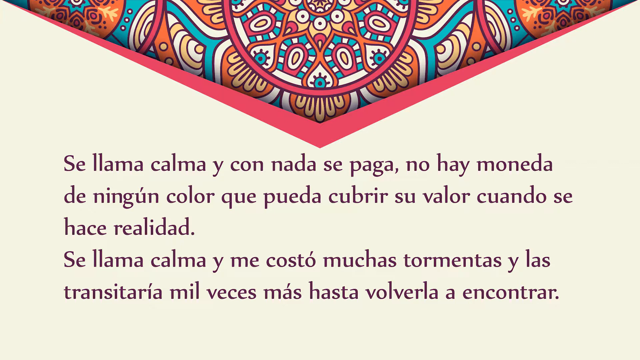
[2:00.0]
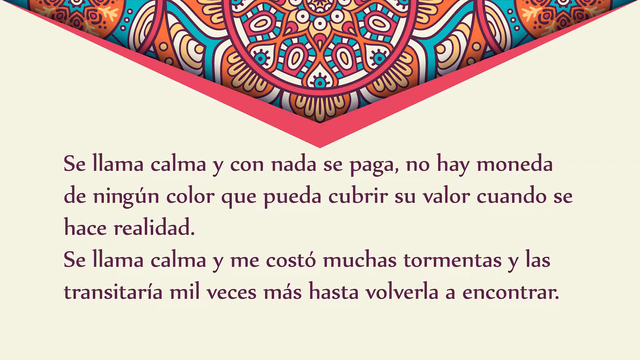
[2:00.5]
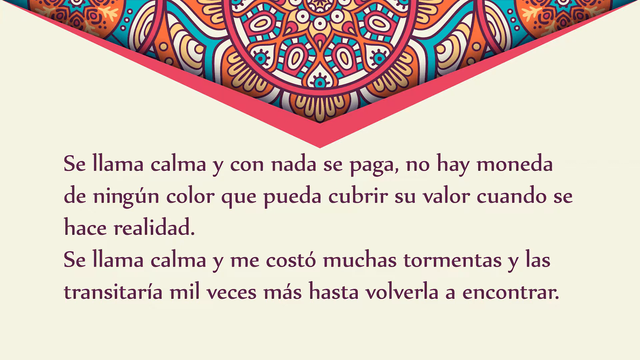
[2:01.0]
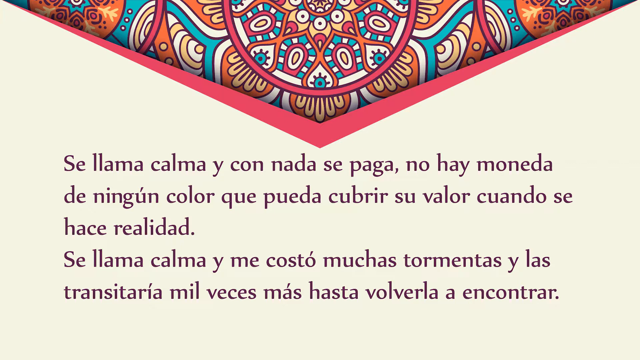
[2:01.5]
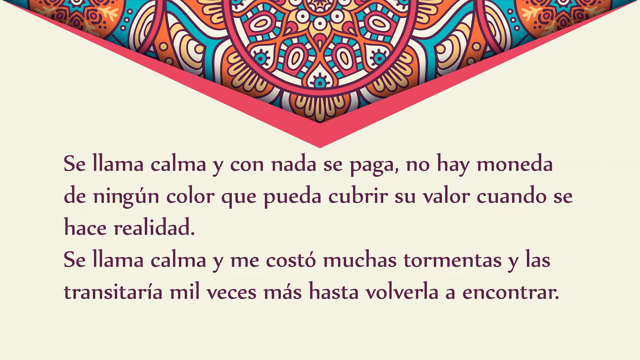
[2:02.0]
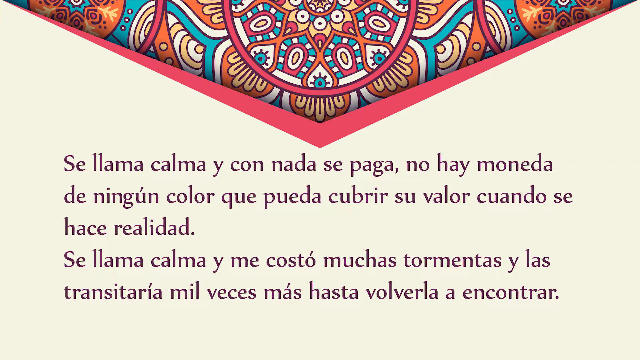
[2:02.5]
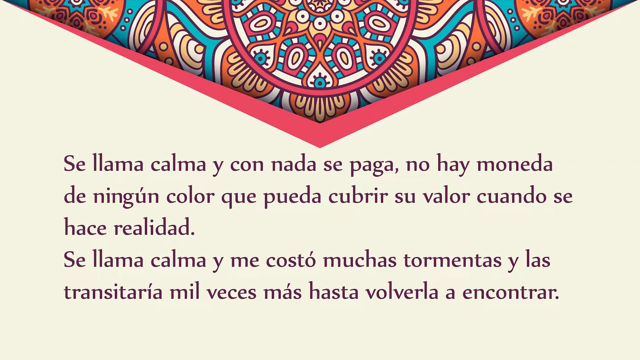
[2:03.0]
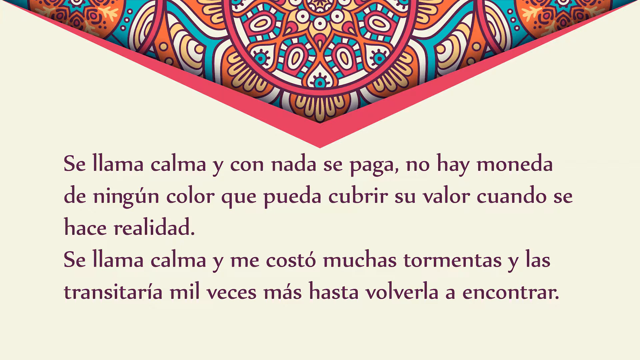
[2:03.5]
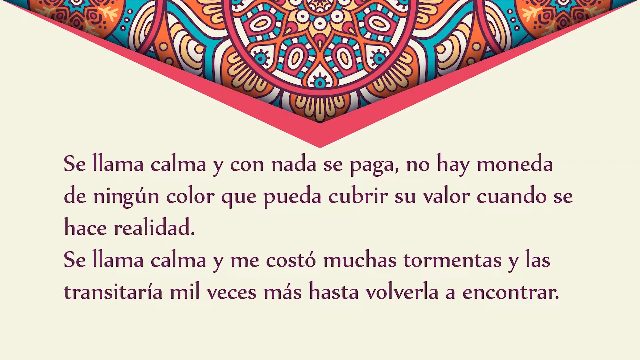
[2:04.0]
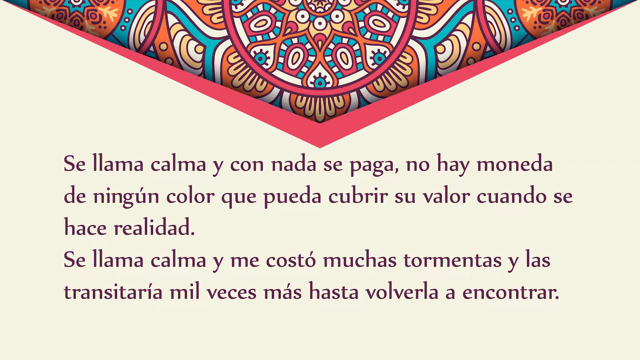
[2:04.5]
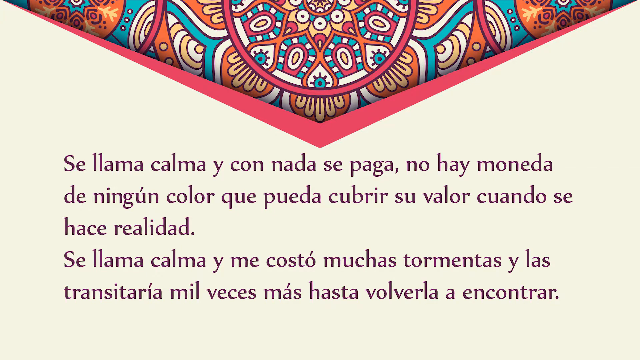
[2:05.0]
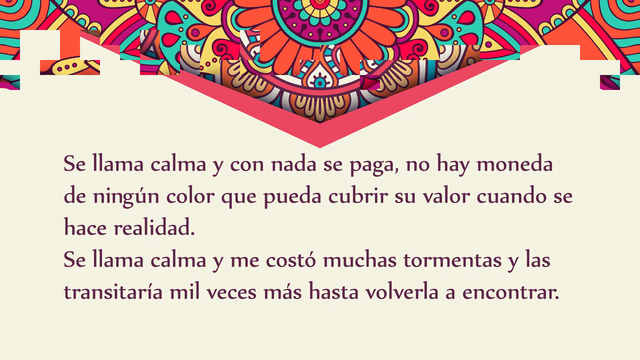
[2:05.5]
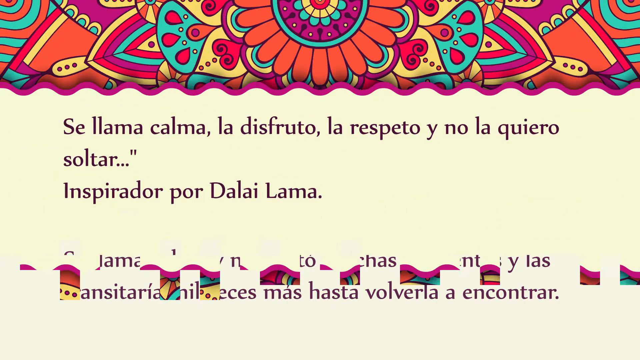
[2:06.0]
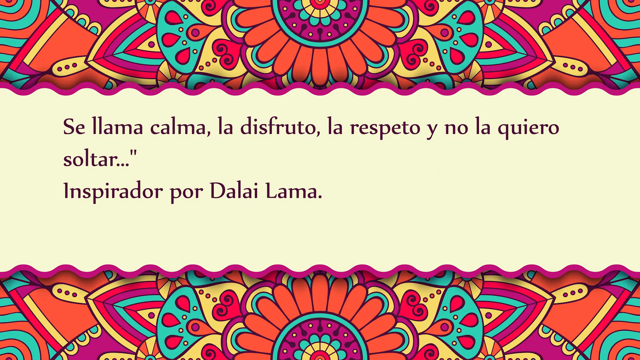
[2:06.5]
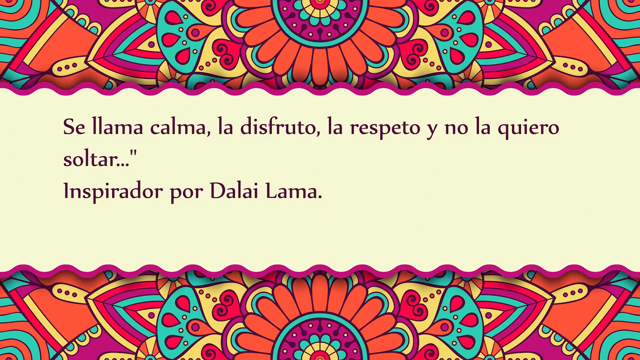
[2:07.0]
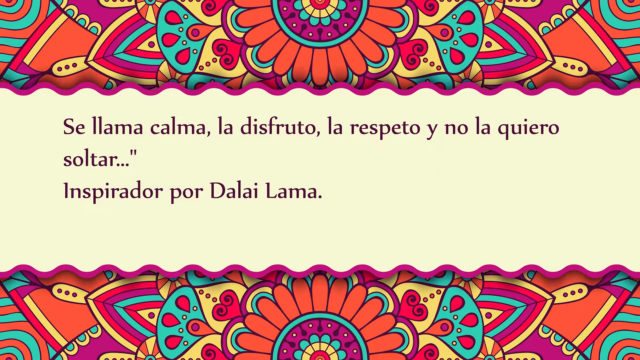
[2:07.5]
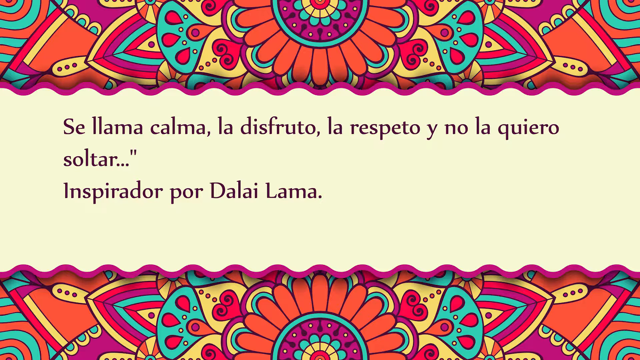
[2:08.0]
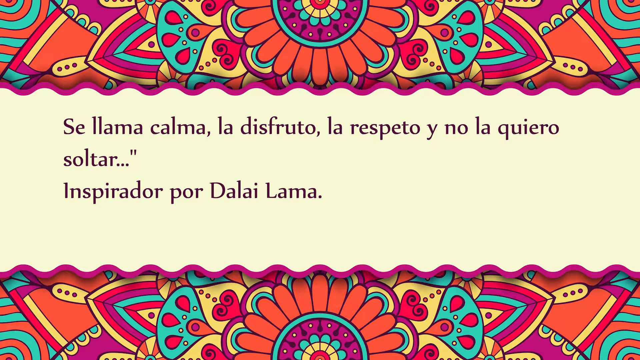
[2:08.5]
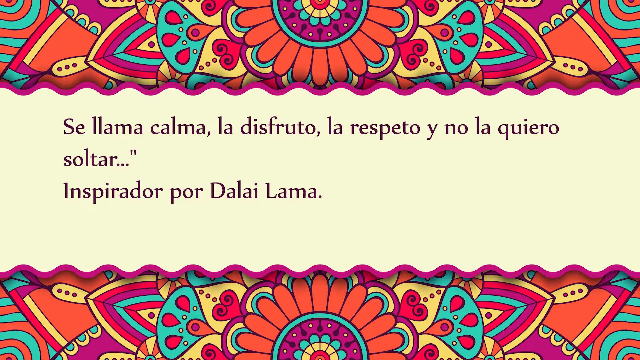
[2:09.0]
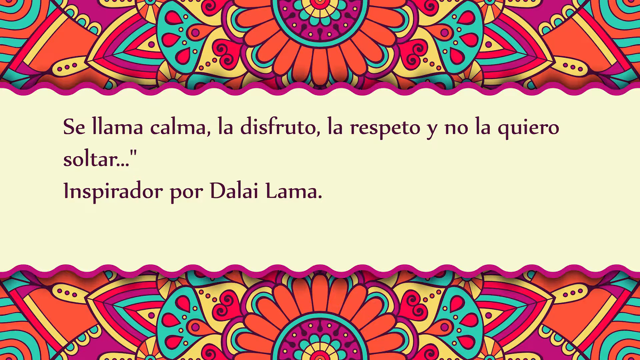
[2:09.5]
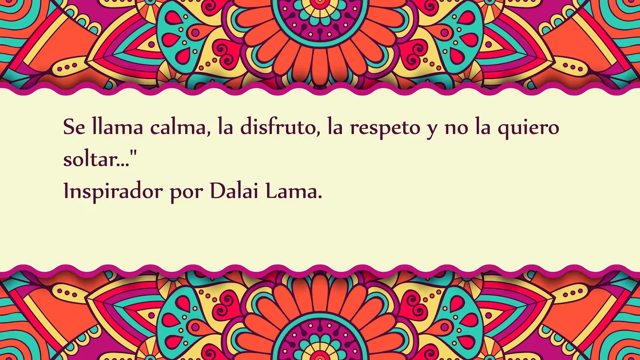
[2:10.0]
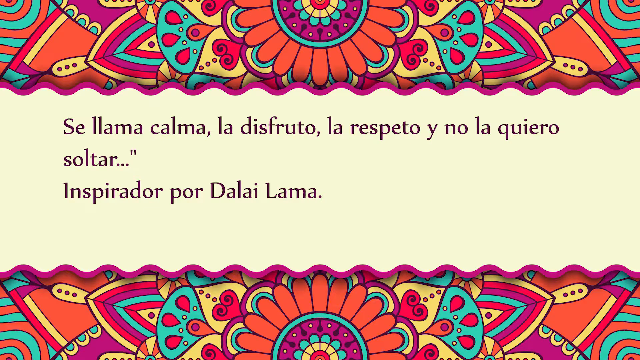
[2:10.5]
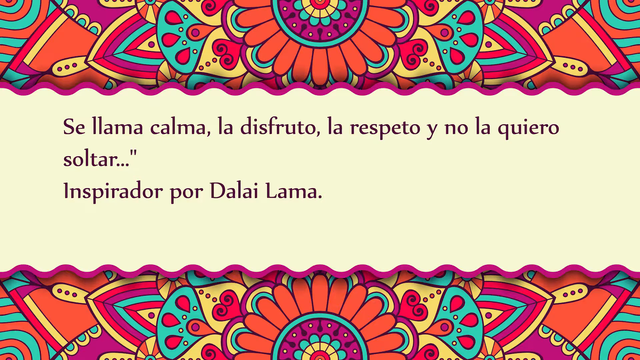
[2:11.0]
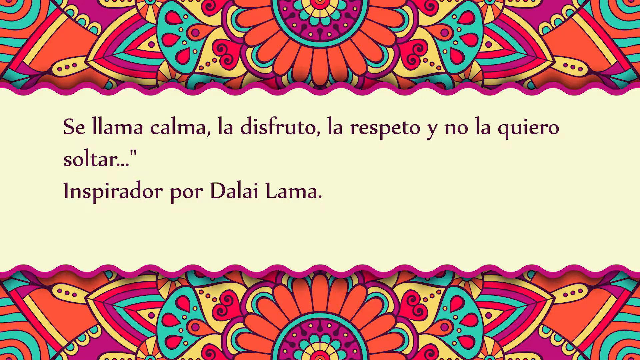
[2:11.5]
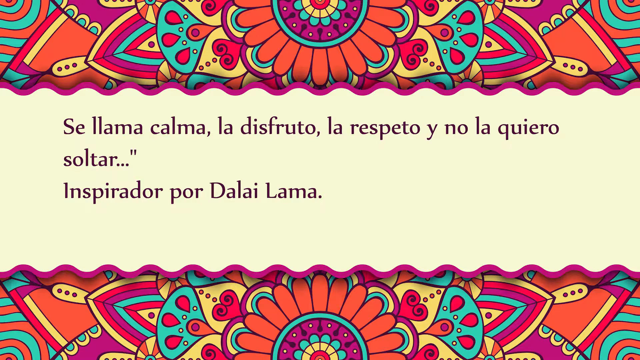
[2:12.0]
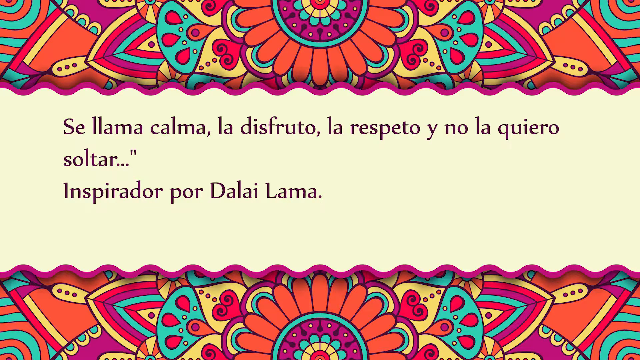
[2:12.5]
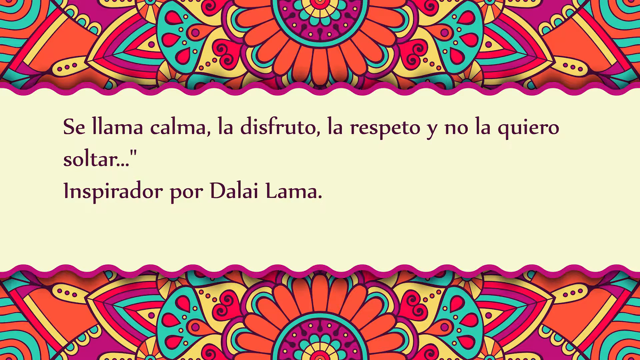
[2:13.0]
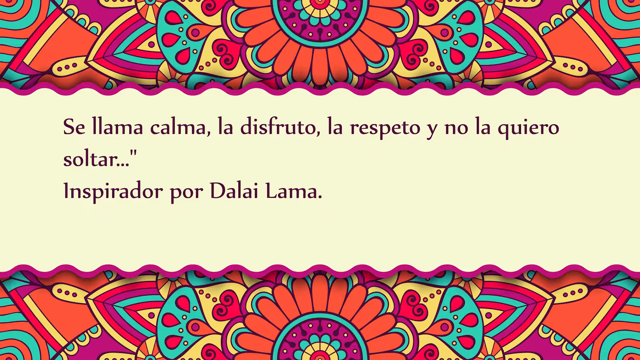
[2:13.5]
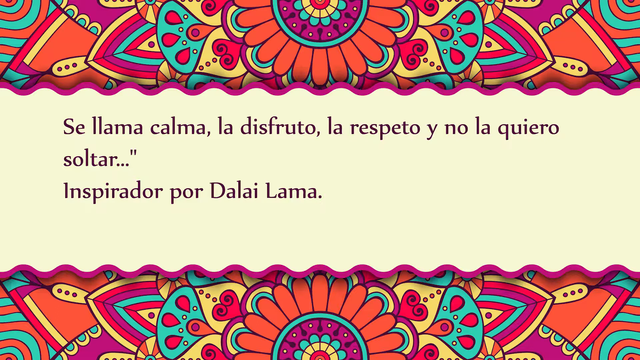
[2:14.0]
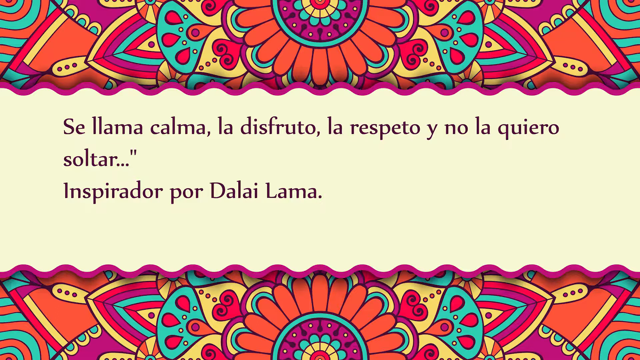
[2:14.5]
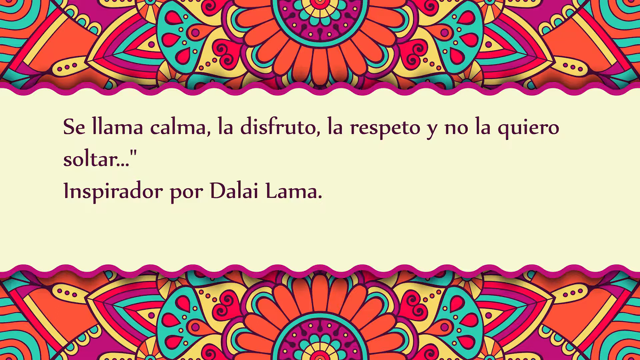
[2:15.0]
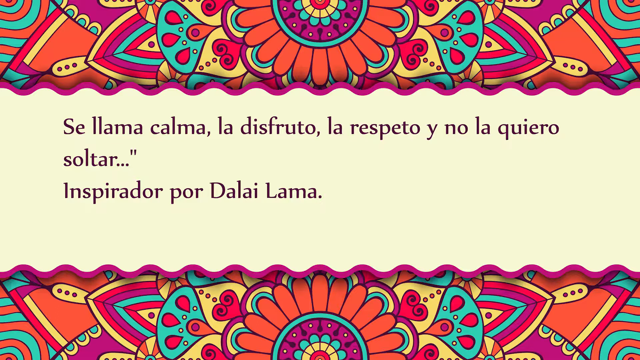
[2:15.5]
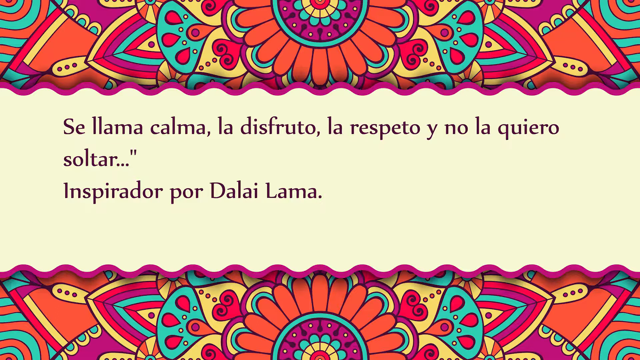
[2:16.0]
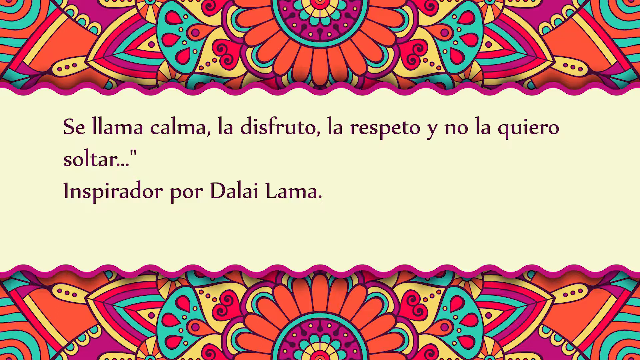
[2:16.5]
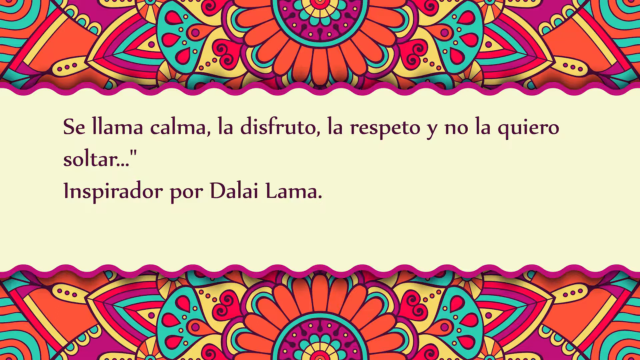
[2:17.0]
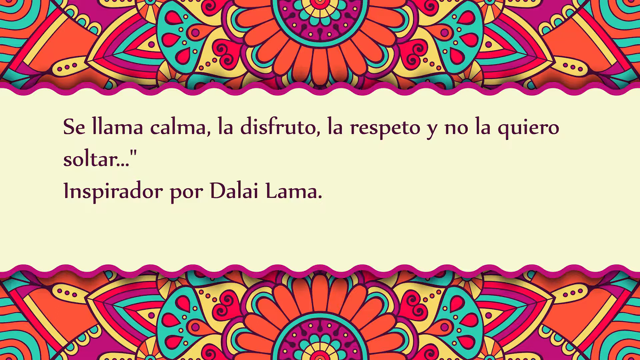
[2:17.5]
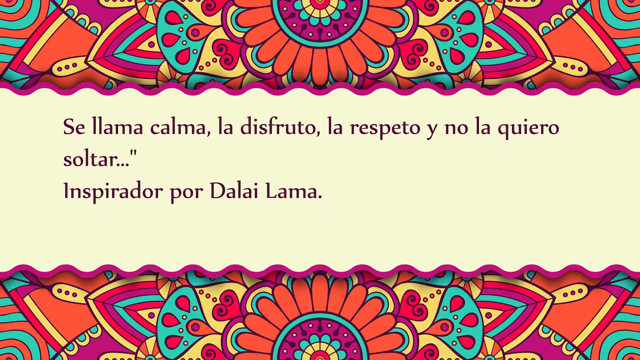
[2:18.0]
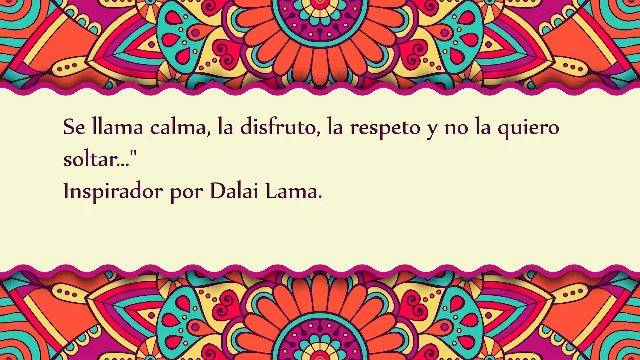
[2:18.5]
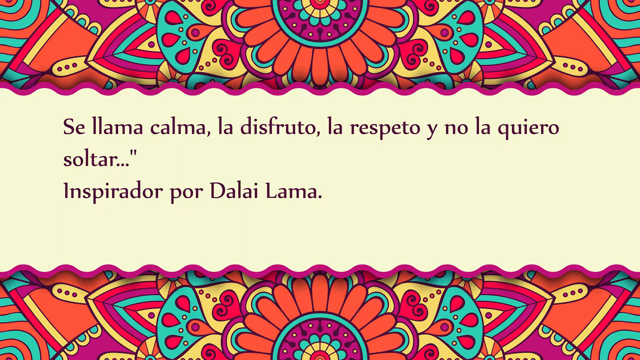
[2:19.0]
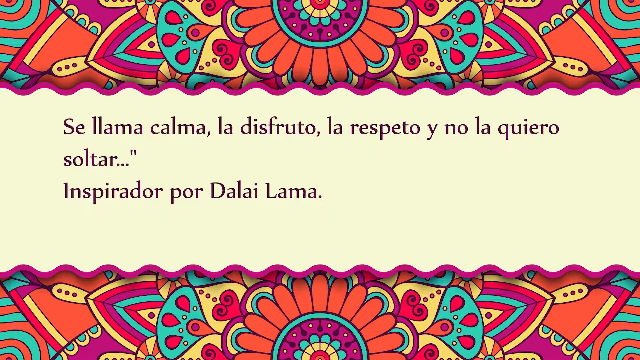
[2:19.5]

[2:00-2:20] The image dissolves from the top to show the end of the quote by the Dalai Lama, with end quotation marks visible. The first three words are the same again, and the text ends with an ellipsis, as if it continues; then text shows that it was inspired by the Dalai Lama. The patterns at the top and bottom are mirror reflections, almost like a circular dial: an orange center, then a layer of yellow and blue curved almost like petals, outlined by a layer of maroon, then an outline in blue with orange petals. The bold colors are a little brighter but not super bright. The patterns on each side mirror each other, with heart-shaped forms whose swirls turn inward, layers of striped triangles, many stripes and overlapping shapes. At the bottom of that border is a wavy red outline, mirrored on the bottom.